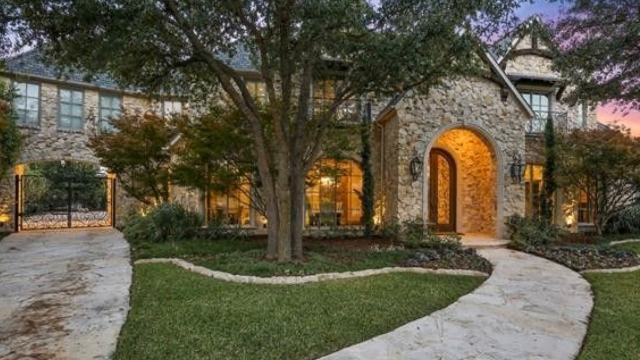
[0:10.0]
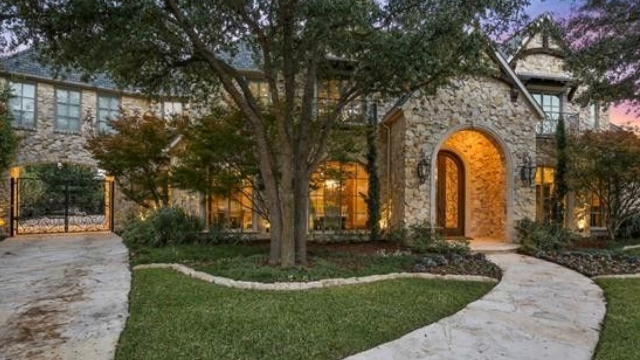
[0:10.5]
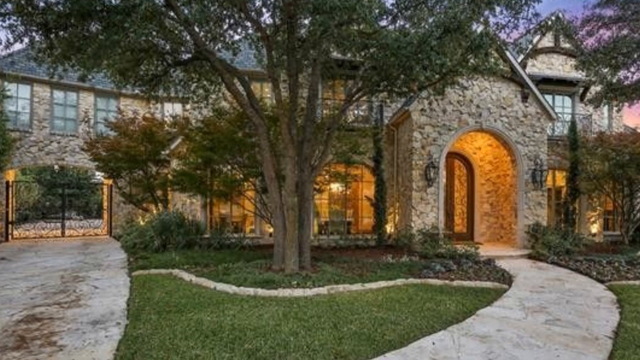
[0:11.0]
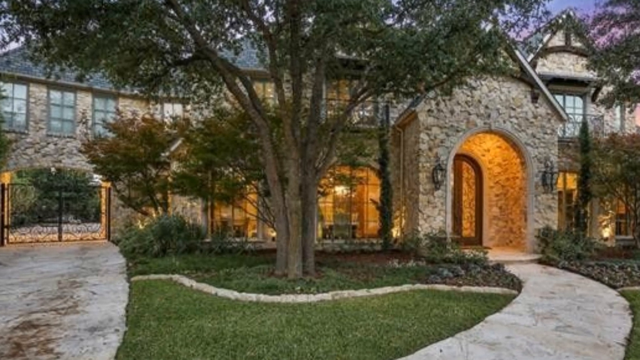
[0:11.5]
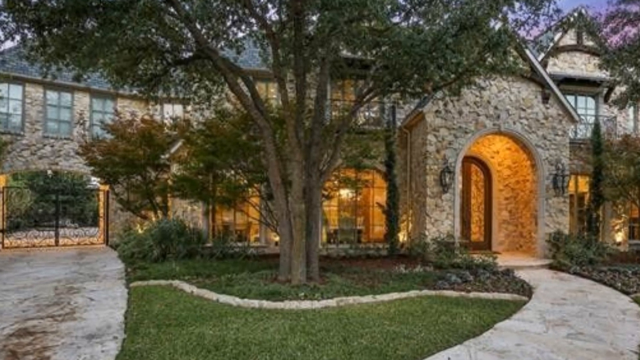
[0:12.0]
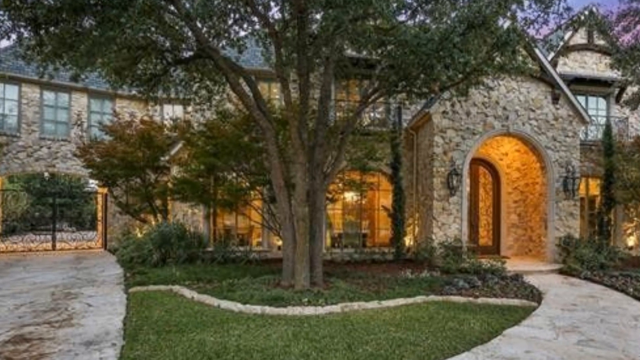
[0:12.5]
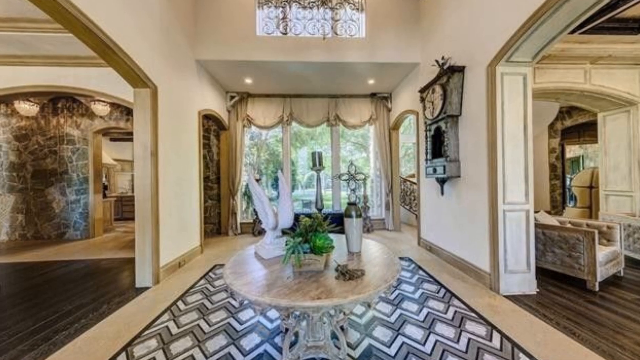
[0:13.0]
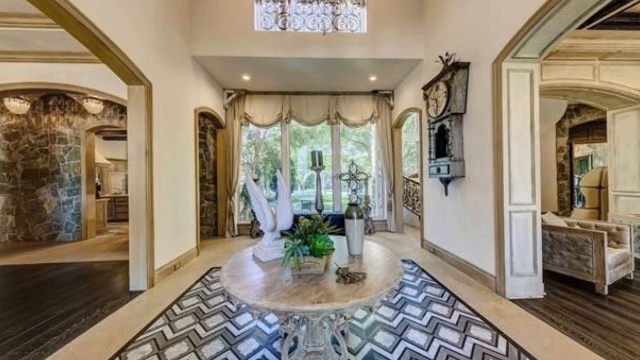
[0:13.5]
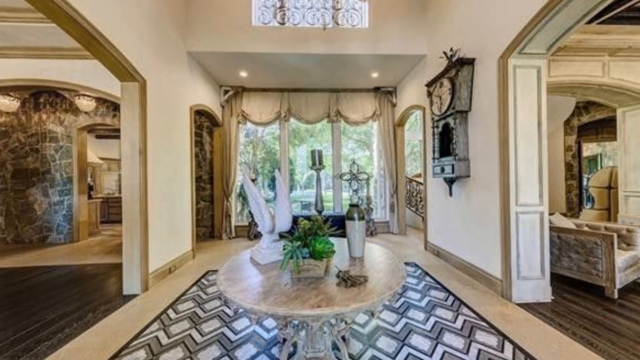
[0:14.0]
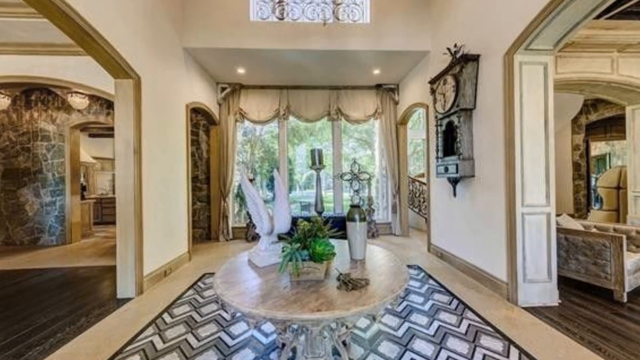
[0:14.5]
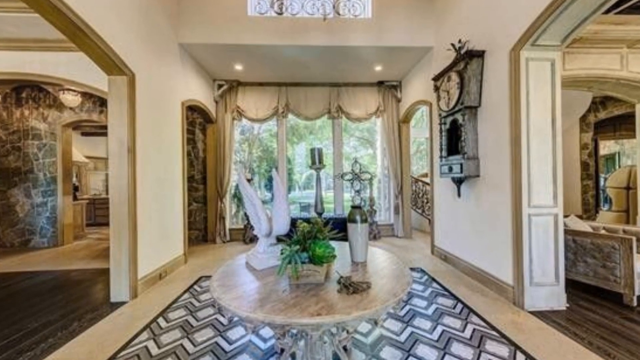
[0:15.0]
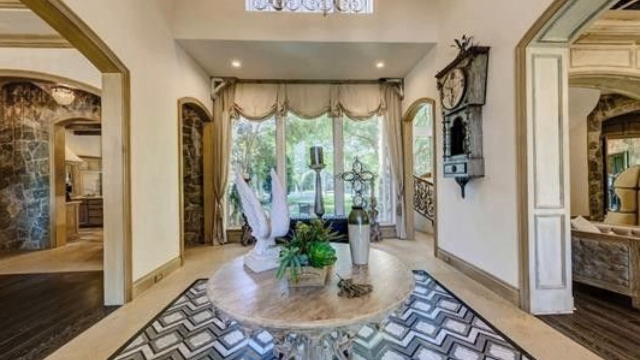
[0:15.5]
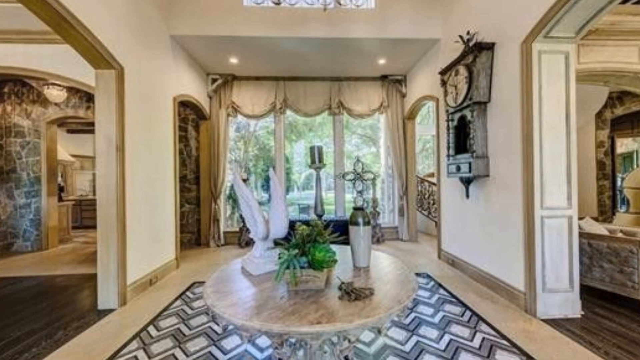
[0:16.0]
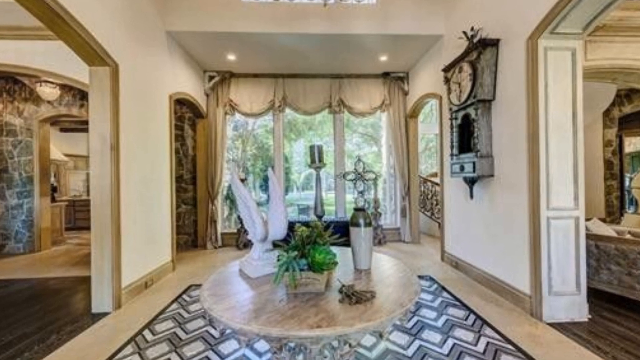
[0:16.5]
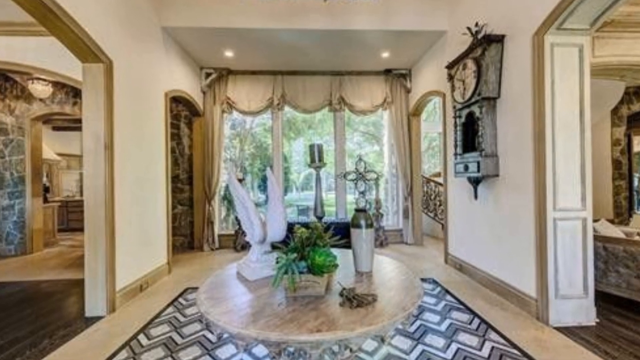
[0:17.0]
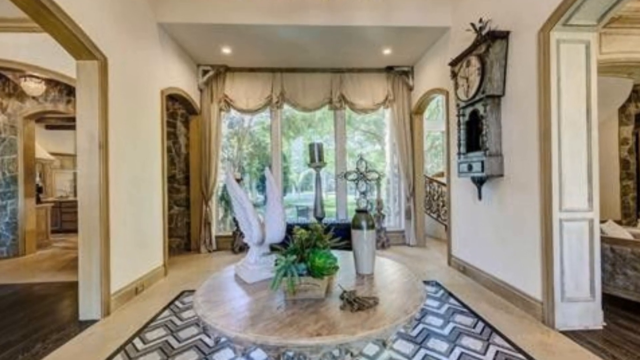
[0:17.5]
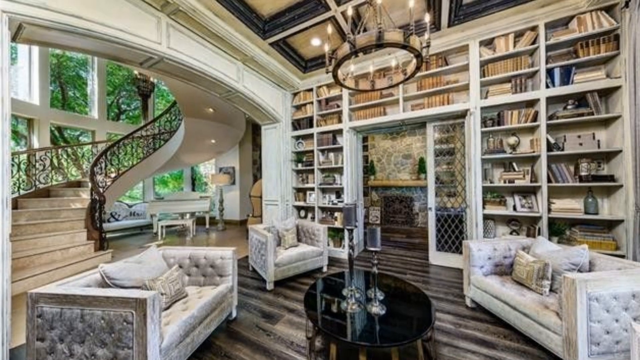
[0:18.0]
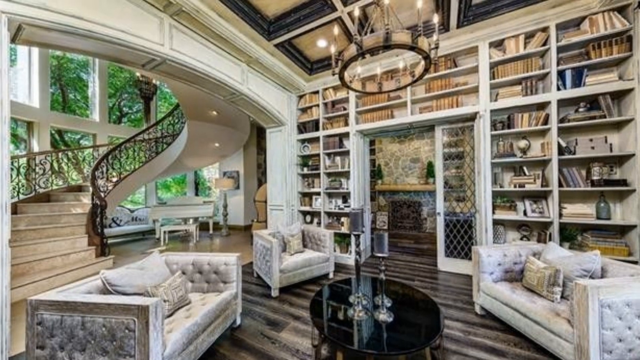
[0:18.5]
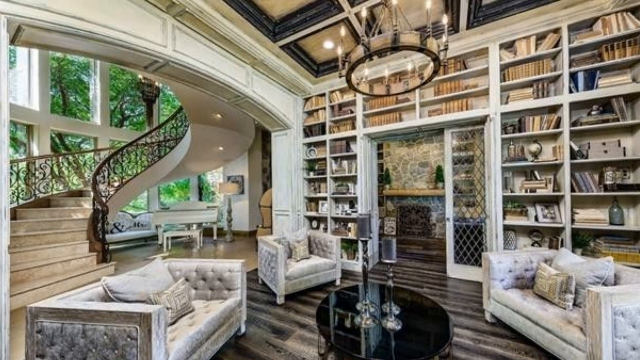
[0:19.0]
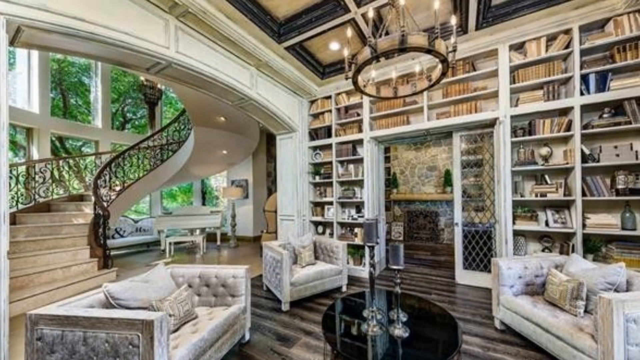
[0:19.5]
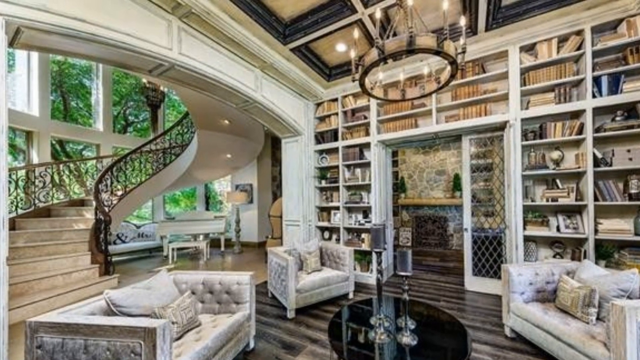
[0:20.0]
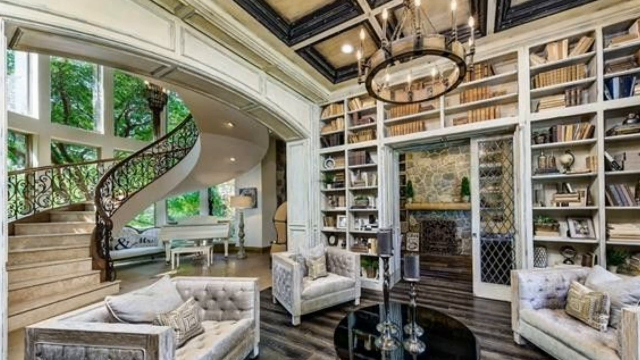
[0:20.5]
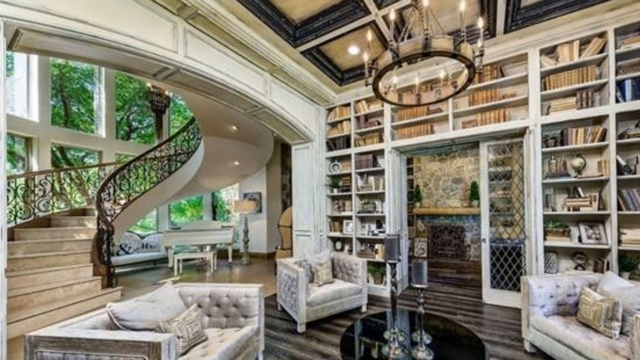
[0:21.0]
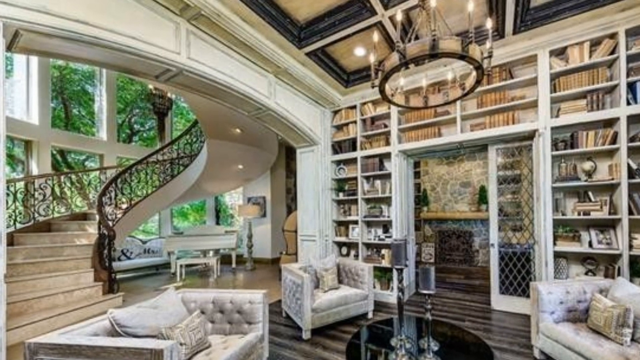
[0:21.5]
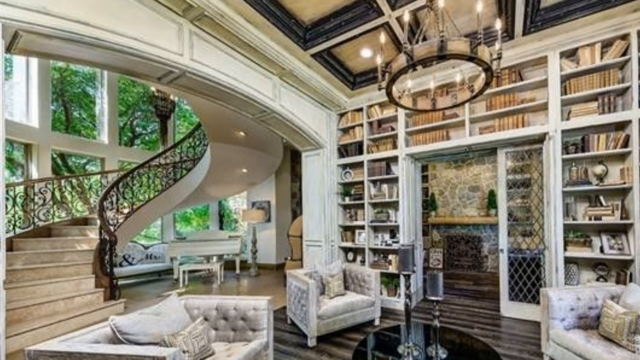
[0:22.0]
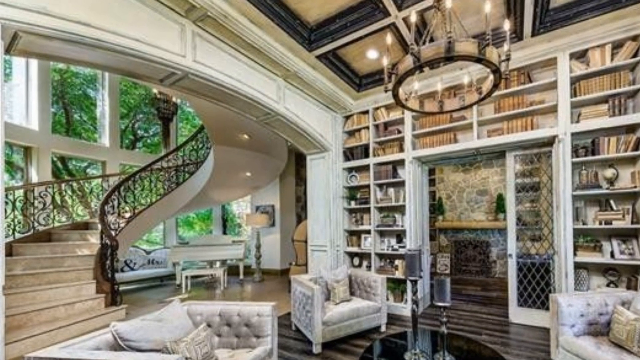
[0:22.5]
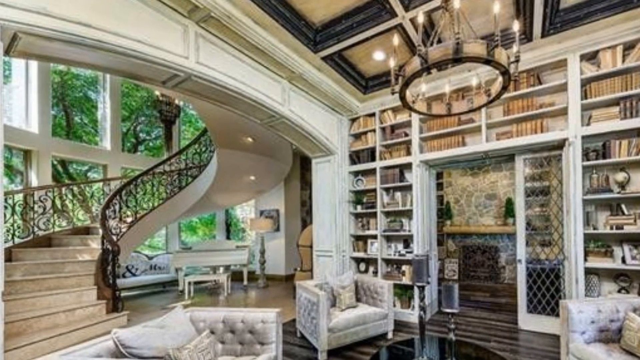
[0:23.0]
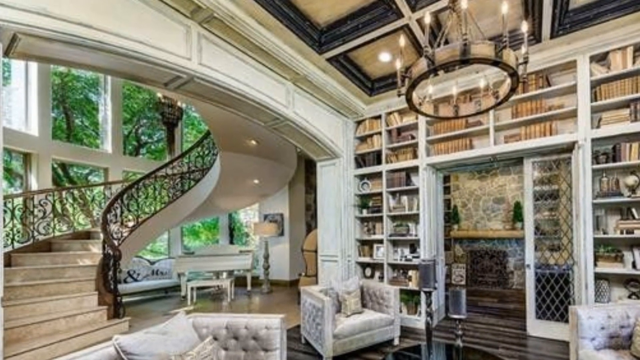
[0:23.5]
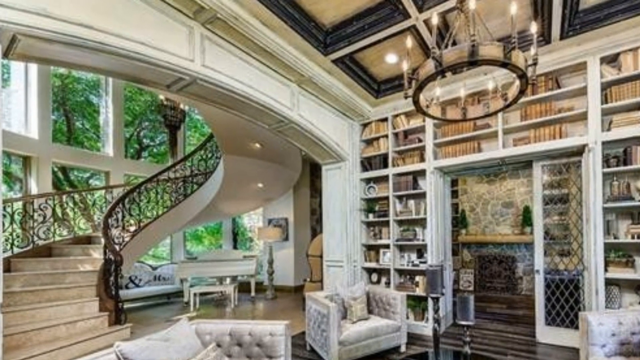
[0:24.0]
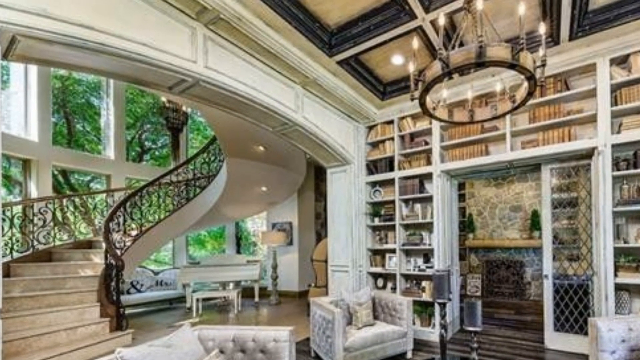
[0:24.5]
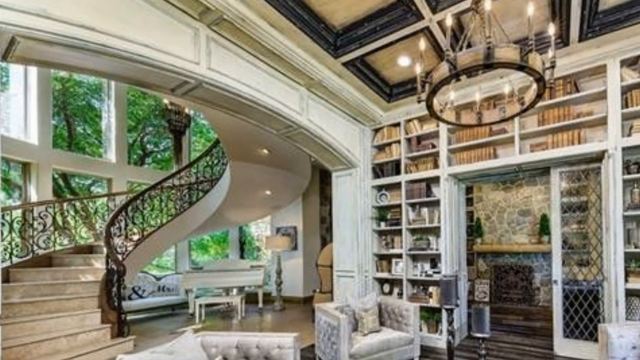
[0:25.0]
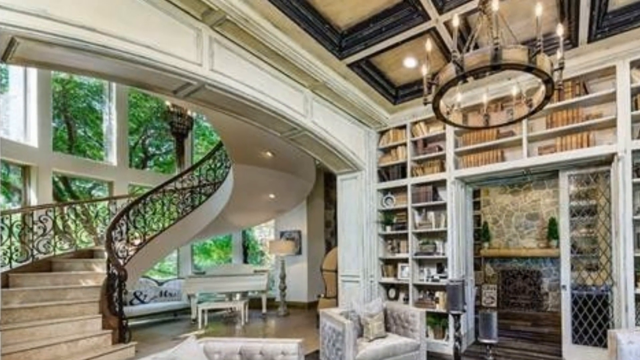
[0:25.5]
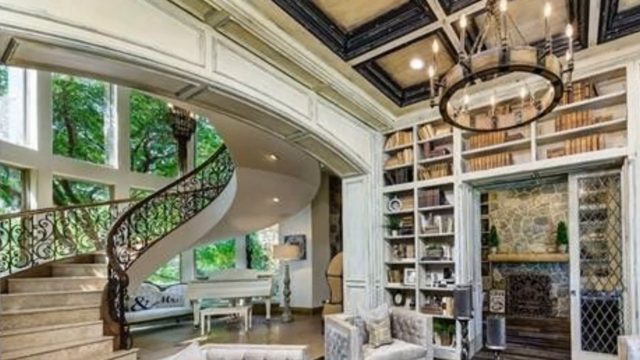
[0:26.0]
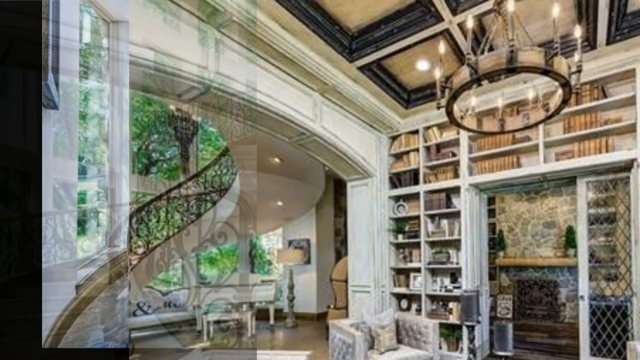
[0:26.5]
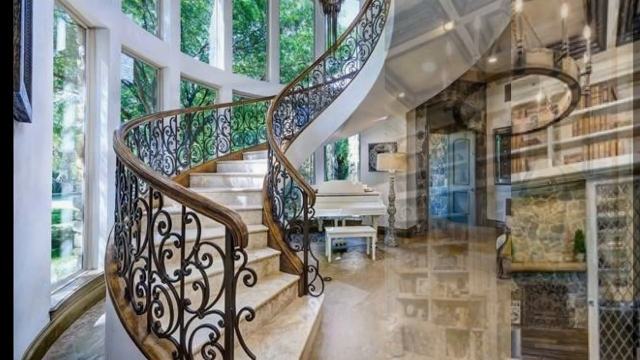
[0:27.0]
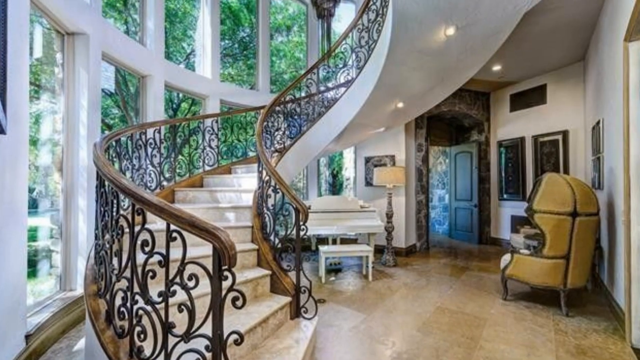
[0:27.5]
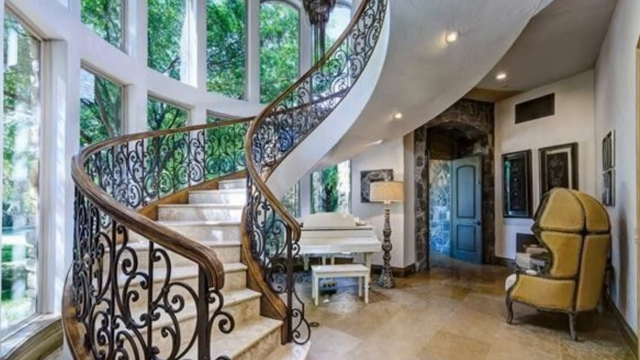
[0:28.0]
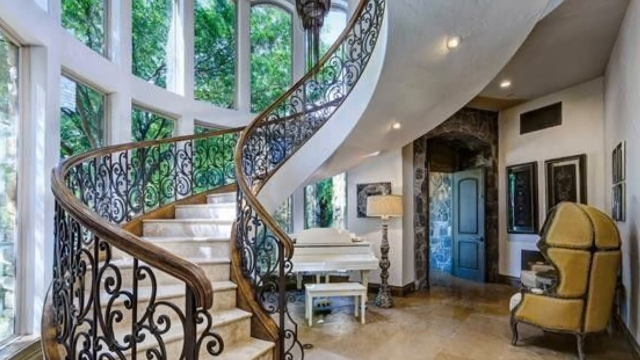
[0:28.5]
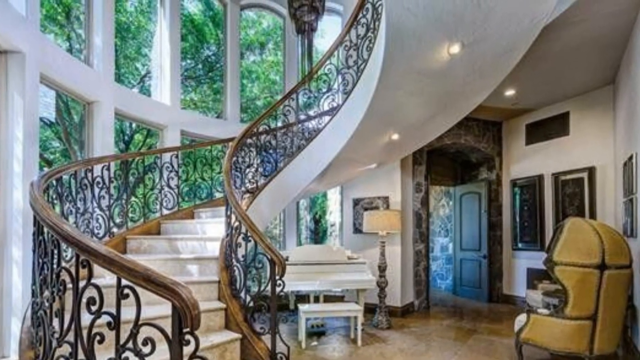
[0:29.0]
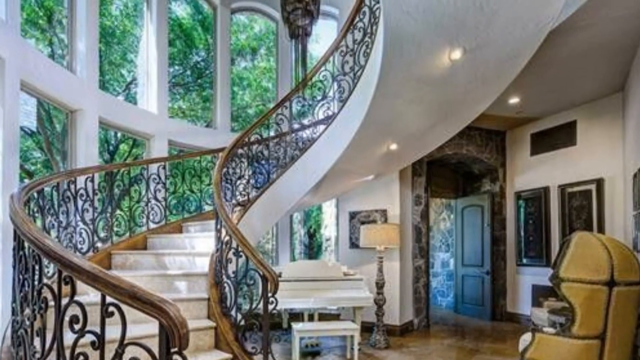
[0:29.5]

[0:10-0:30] The camera continues zooming in on the house, not toward any particular point but into the middle, where a tree blocks the view into a window, so the zoom moves onto the tree. The zoom then continues inside the house, into what is probably a concourse-like area between other rooms, possibly a hallway, with a table in it that does not seem to be a dining table. This room seems to be in the middle of the house on the ground floor, and the camera zooms into it a lot. The view then switches to a library-looking room with very tall walls and many shelves holding many books. The interior is very modern, with a lot of white, along with blacks and cream colors. A spiral staircase goes off to the left, apparently upward.